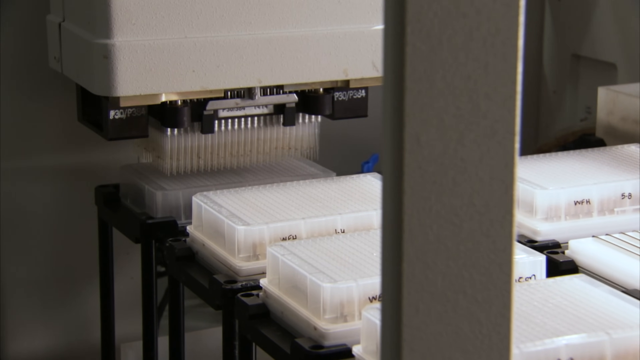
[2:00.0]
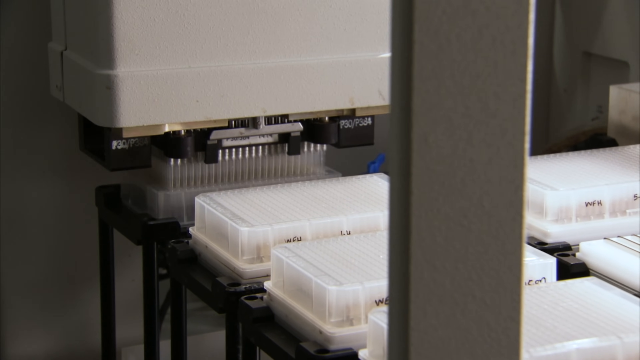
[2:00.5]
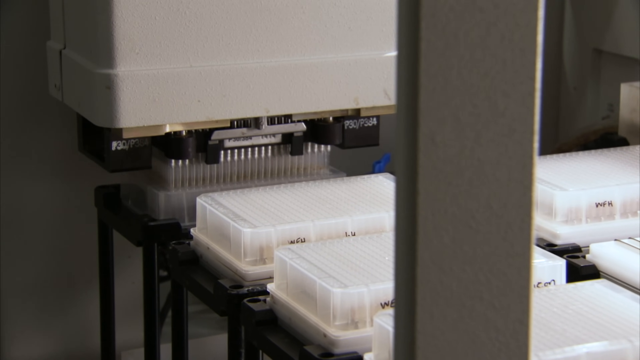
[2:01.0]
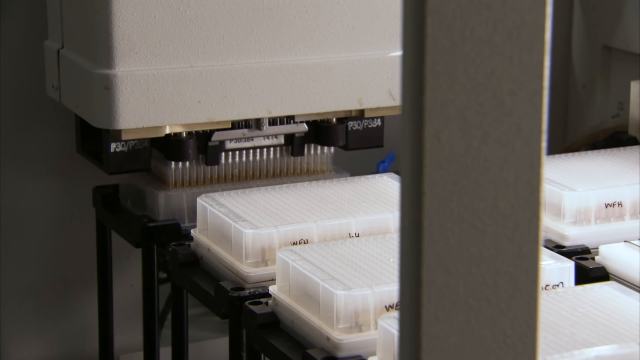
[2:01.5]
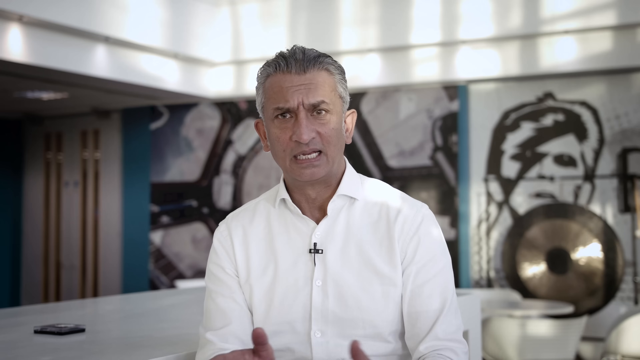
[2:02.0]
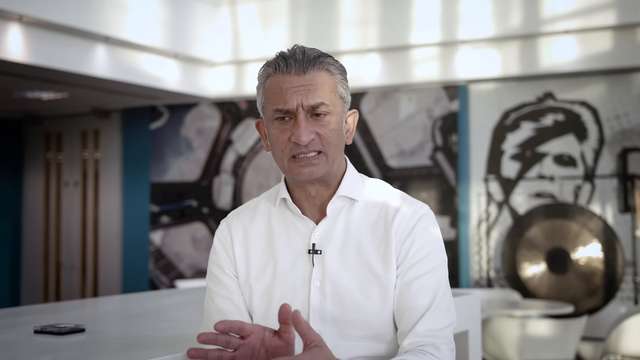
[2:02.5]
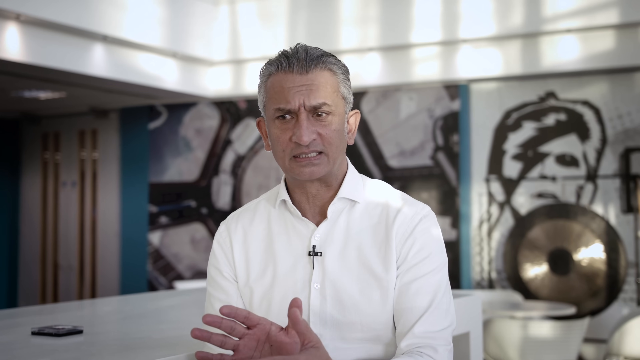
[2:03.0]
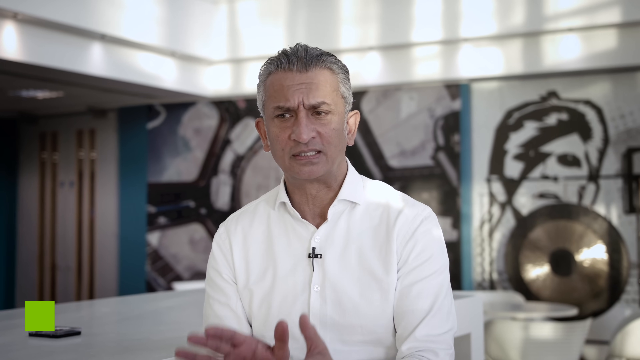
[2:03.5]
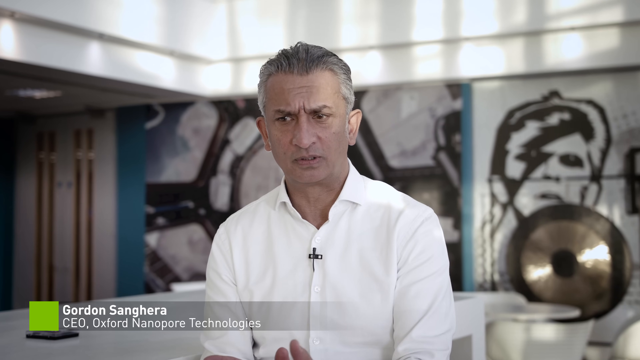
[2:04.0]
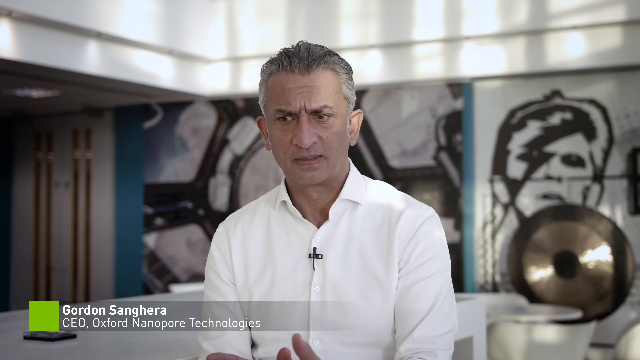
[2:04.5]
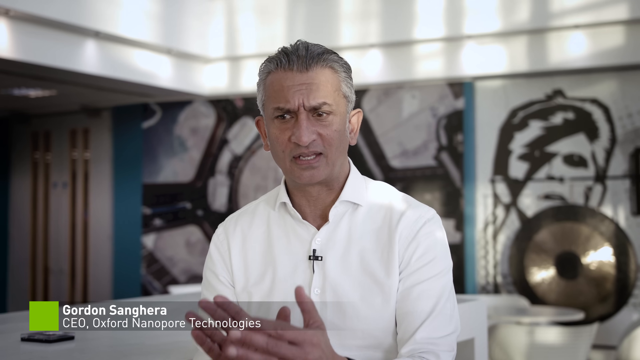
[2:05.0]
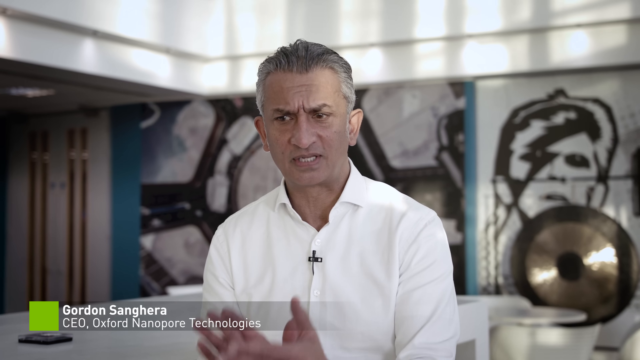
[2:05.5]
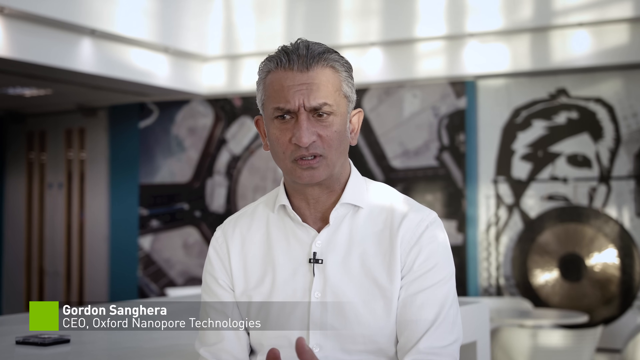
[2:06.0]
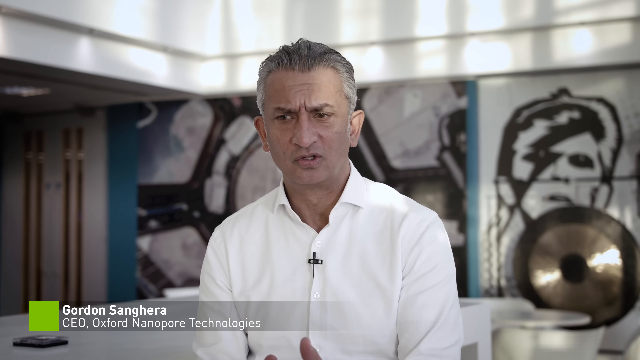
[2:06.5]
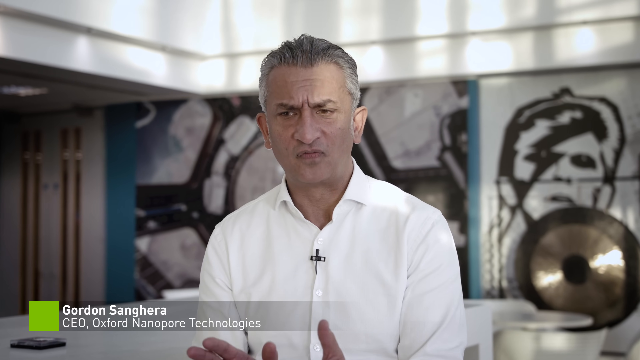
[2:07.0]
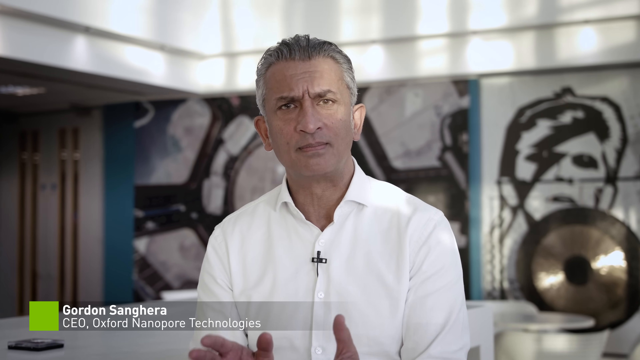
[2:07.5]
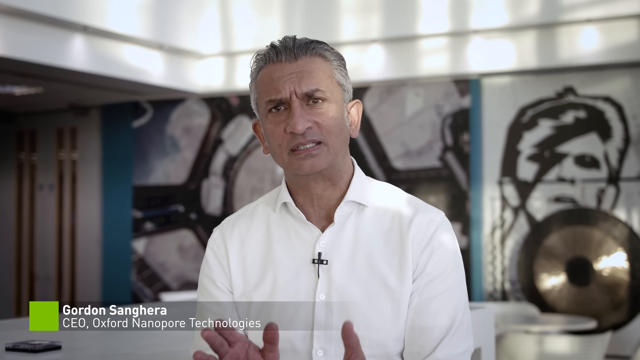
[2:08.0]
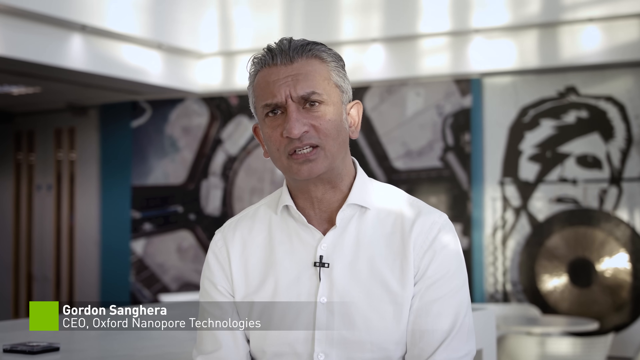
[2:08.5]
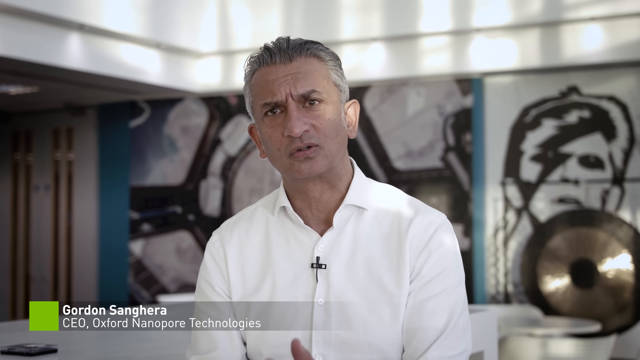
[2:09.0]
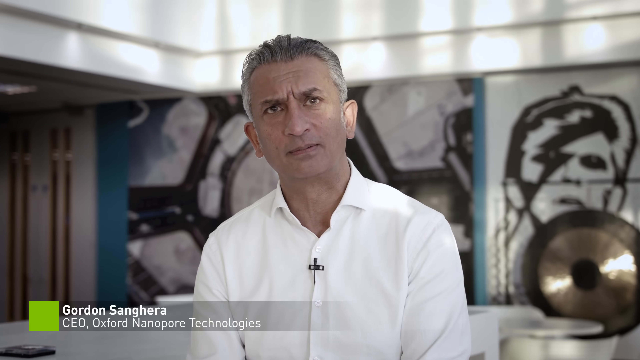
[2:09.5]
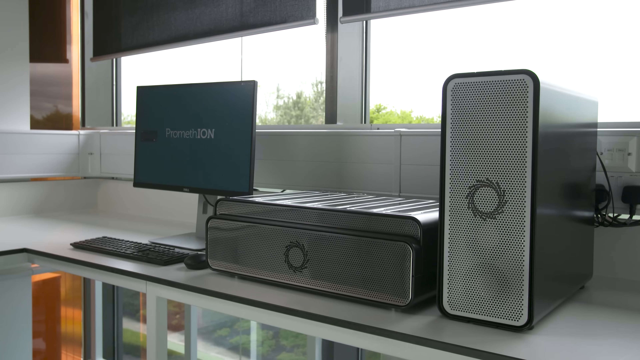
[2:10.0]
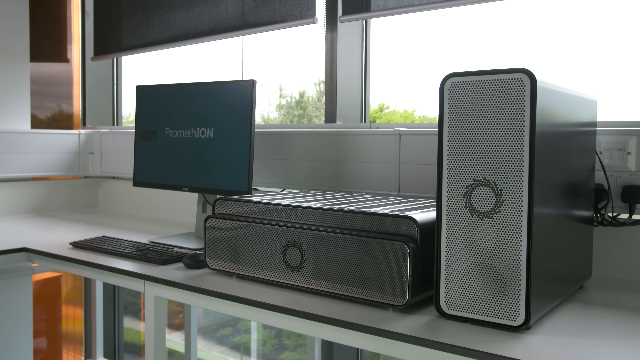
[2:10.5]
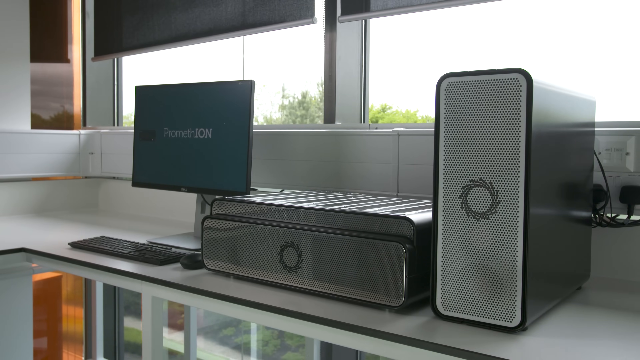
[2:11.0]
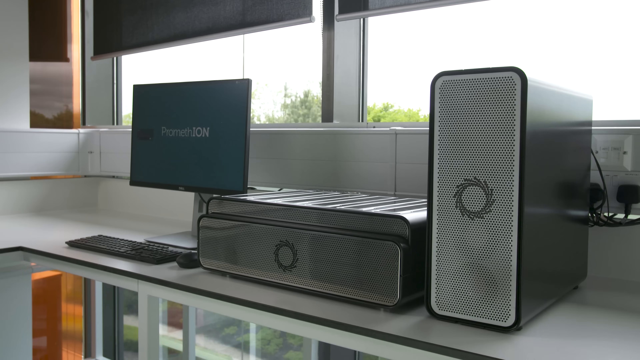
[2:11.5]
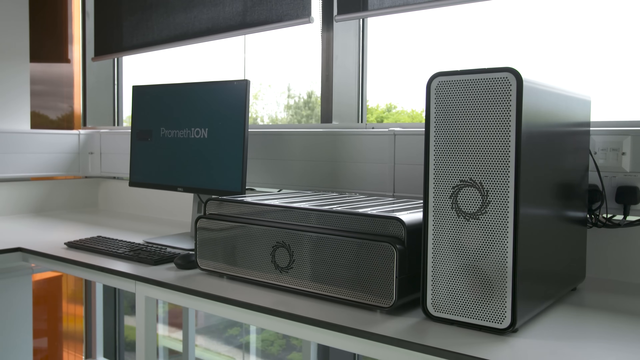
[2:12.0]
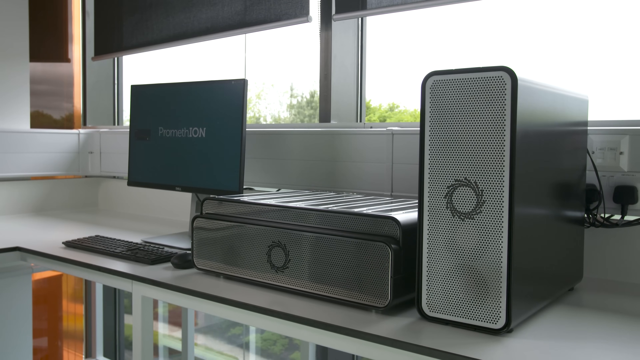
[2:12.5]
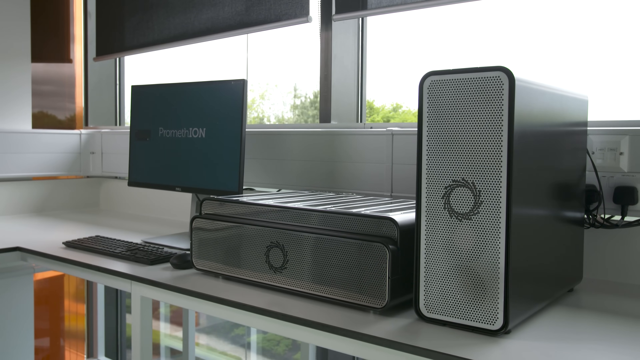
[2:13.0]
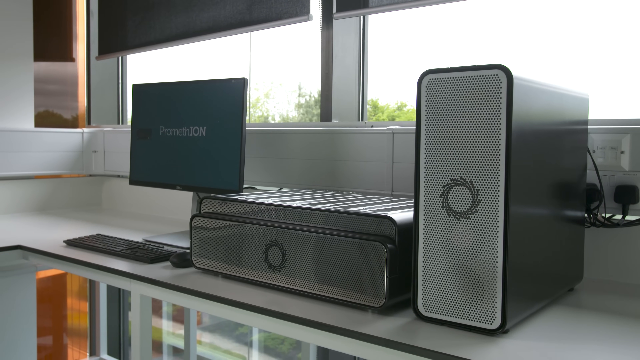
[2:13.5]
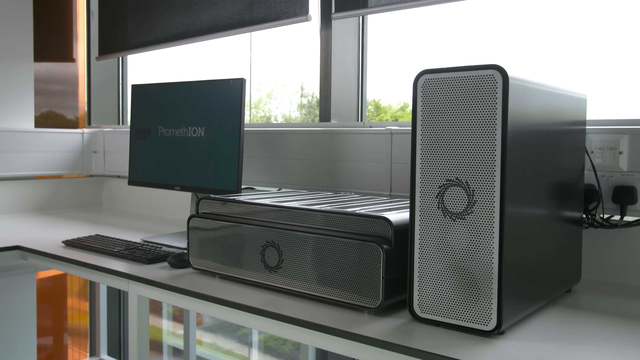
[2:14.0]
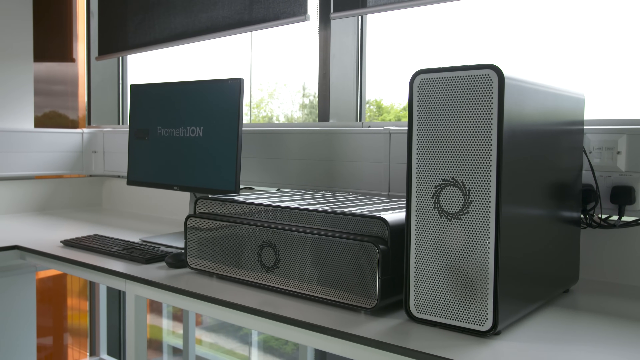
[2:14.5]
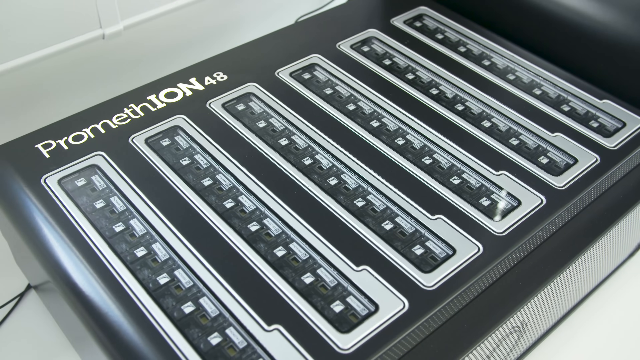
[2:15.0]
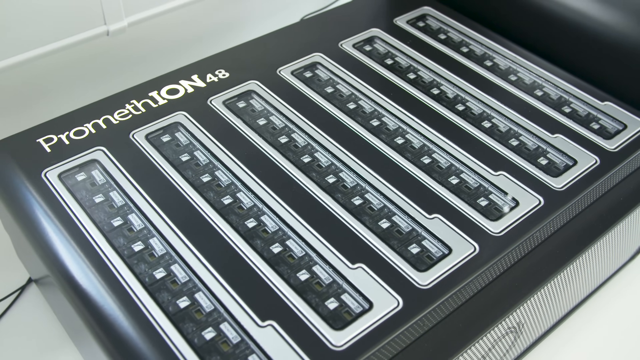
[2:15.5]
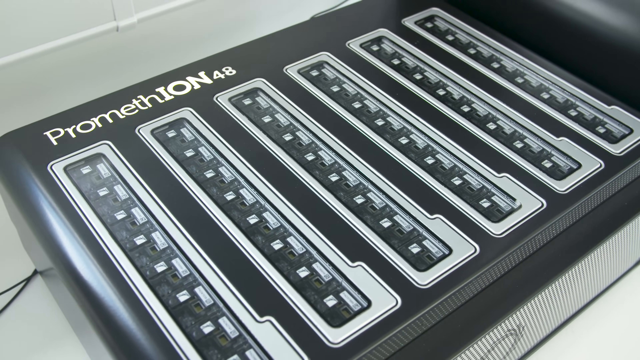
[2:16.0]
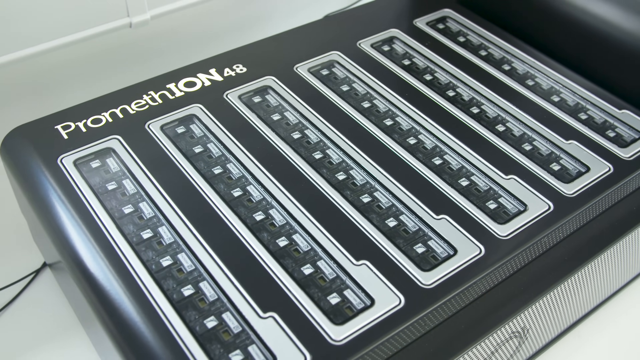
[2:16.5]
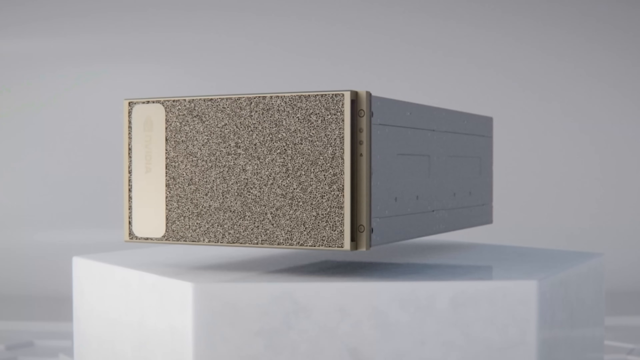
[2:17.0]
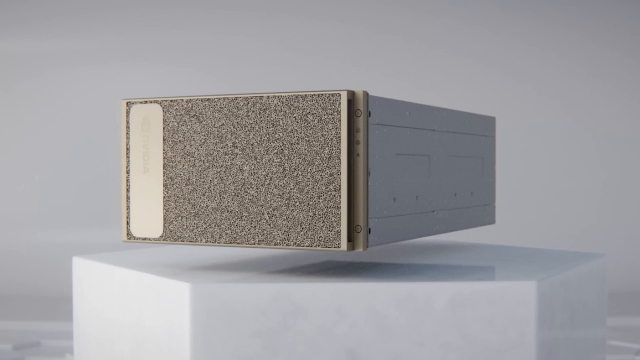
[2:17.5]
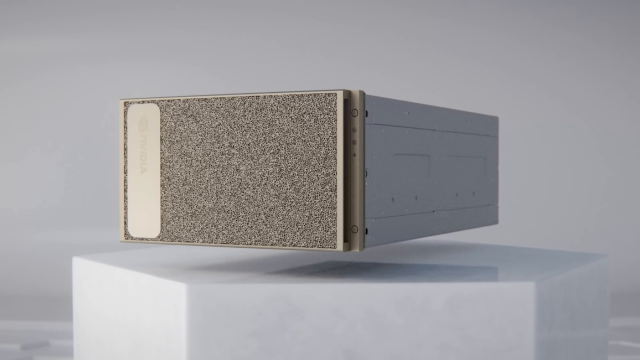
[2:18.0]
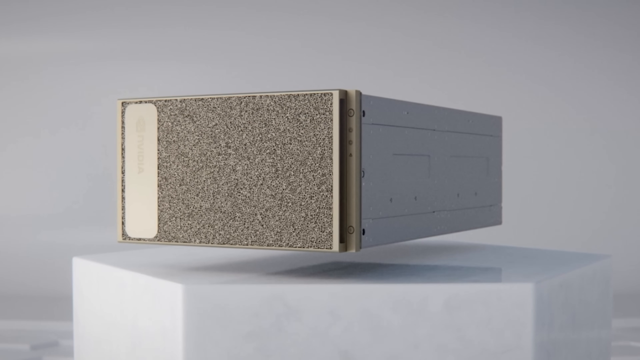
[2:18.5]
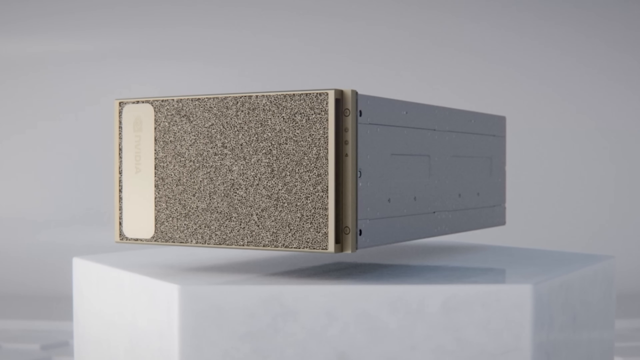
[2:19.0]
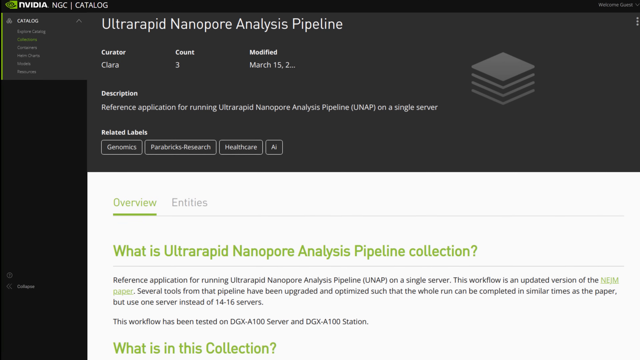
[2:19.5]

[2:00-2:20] Test tubes are being filled. Then the text "Gordon Sanghera, CEO, Oxford Nanopore Technologies" appears with the same man, who looks to be Indian, with a brown complexion, brown eyes, salt-and-pepper, kind of short to medium-length hair; he looks to be in his 50s, is clean shaven, and wears a buttoned-up white shirt with a black microphone attached. Off to the right of him are the picture of David Bowie, the drums symbol and the picture of the International Space Station. He is talking. Next is a computer with the PromethION symbol on it on a white desk; the keyboard off to the left is black, the monitor is black and the monitor stand is silver. There are two black rectangular objects that look like computer towers, each with what looks to be a circular symbol that kind of looks like a hurricane. Then what looks to be a chip, like a microchip, appears with the text "PromethIOIN 48."